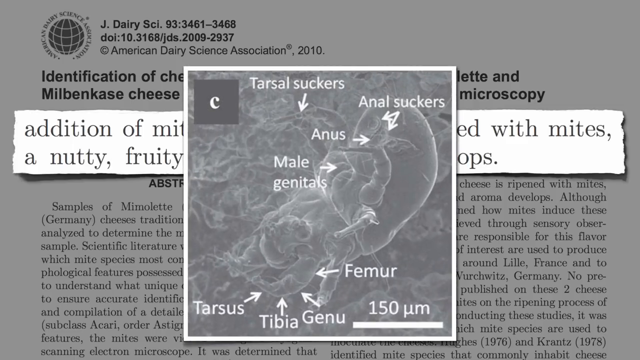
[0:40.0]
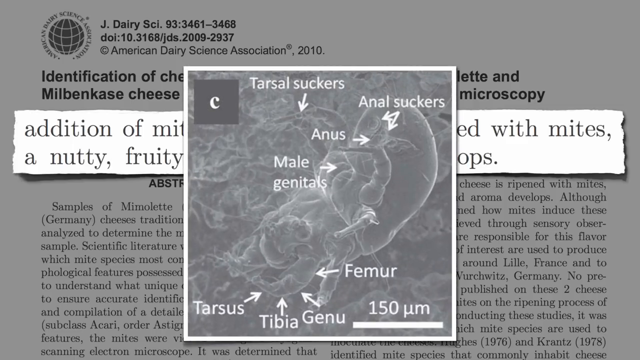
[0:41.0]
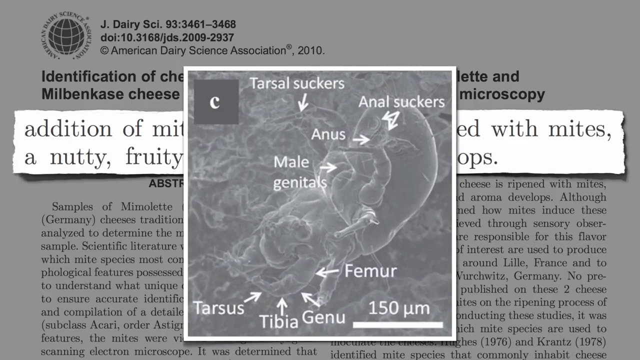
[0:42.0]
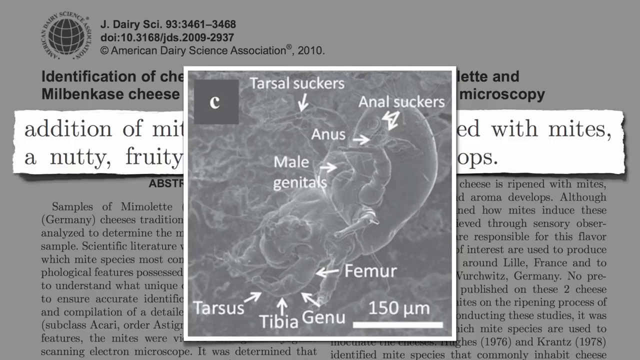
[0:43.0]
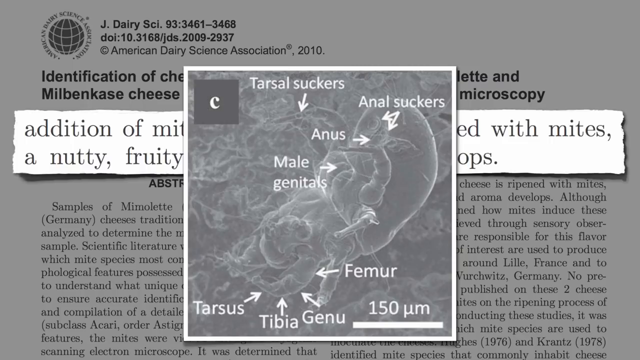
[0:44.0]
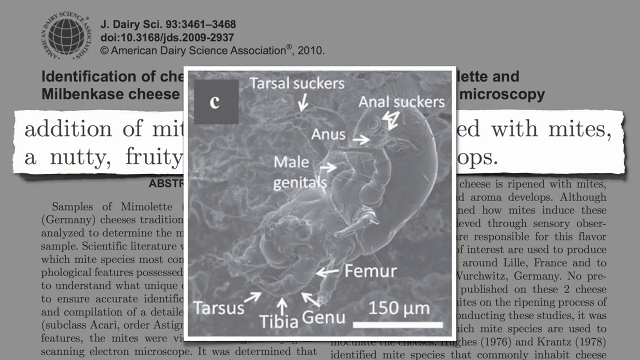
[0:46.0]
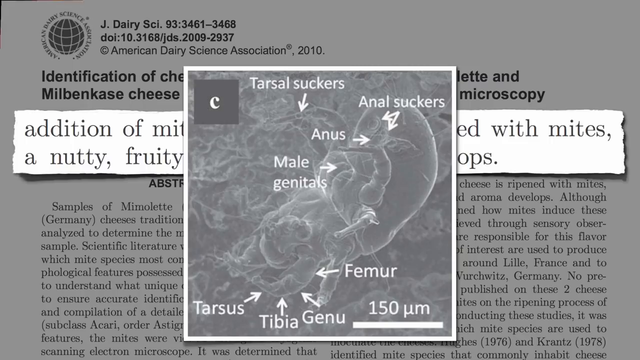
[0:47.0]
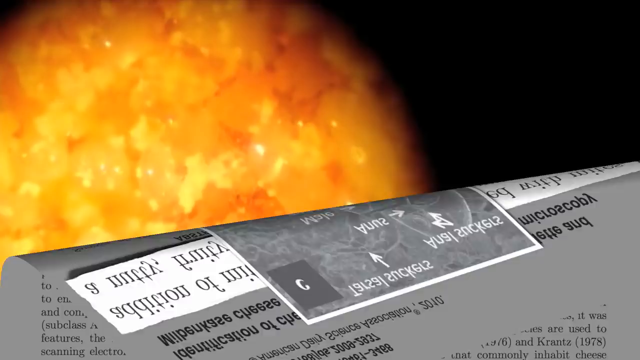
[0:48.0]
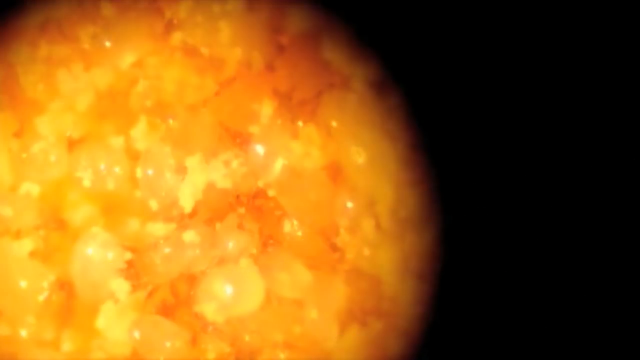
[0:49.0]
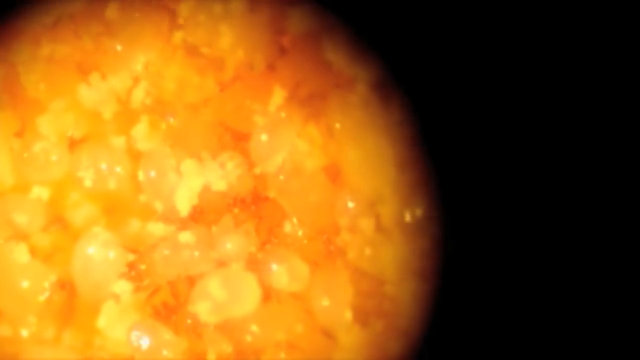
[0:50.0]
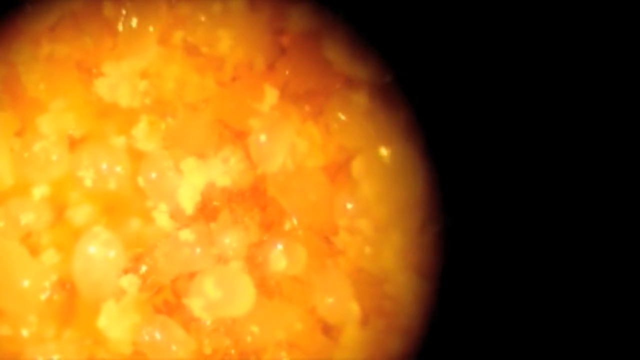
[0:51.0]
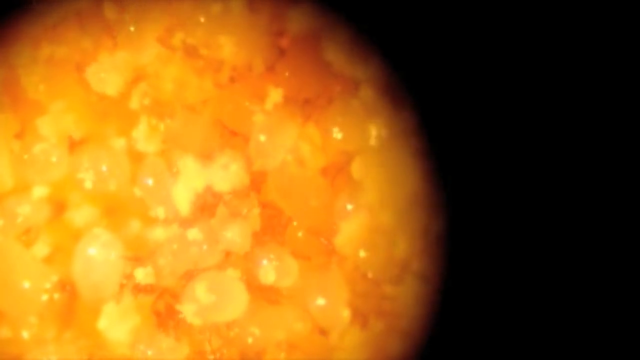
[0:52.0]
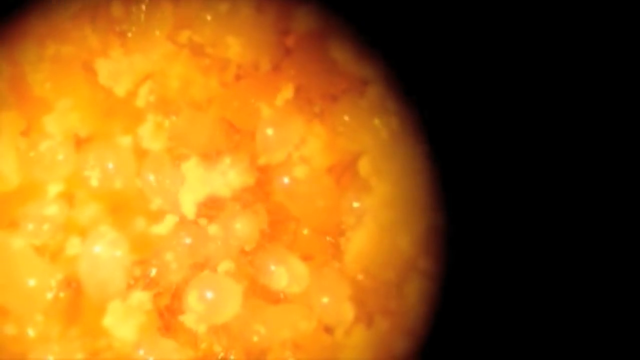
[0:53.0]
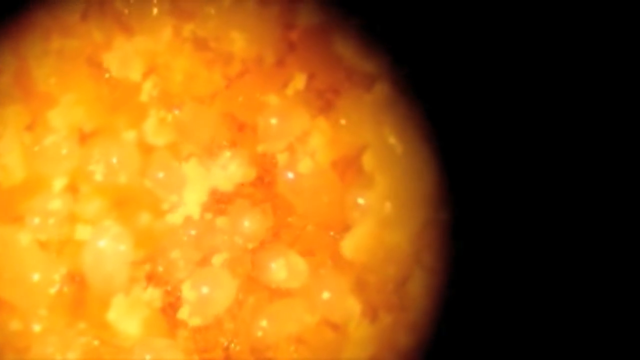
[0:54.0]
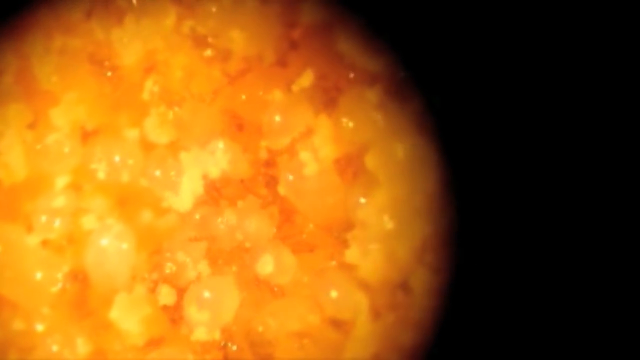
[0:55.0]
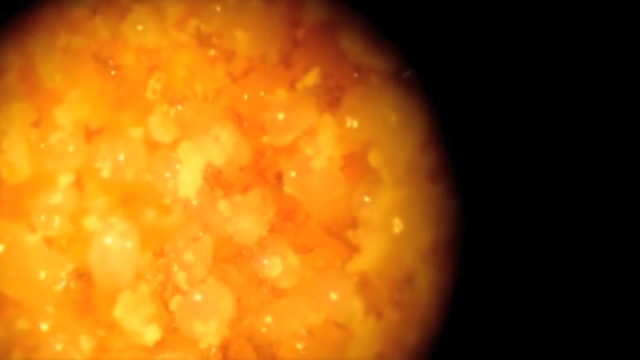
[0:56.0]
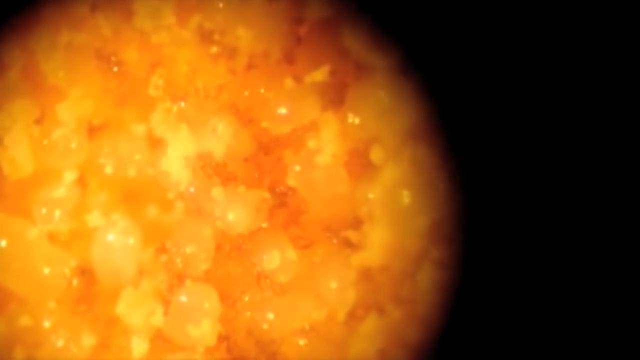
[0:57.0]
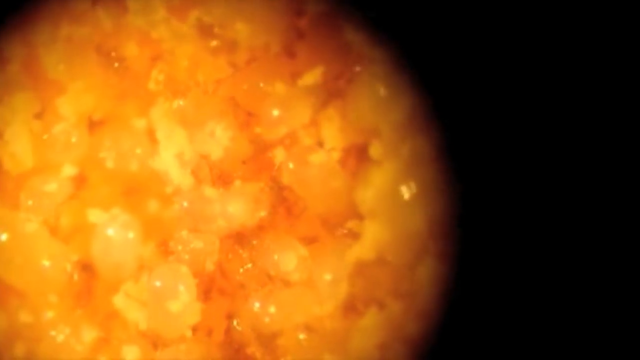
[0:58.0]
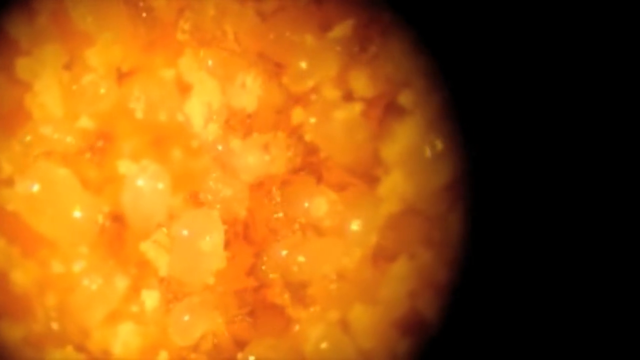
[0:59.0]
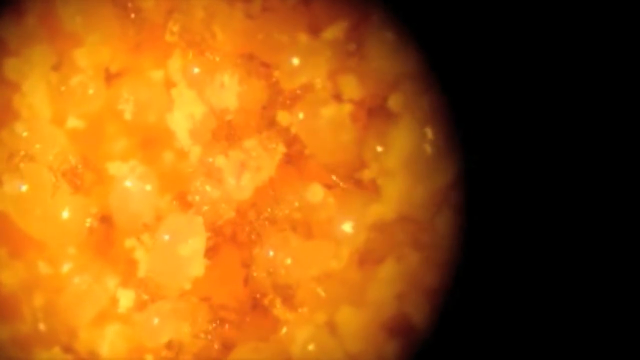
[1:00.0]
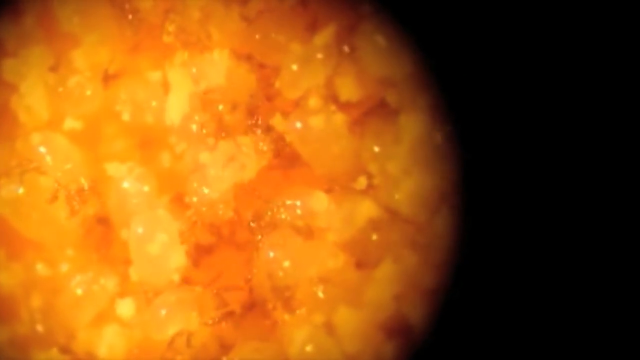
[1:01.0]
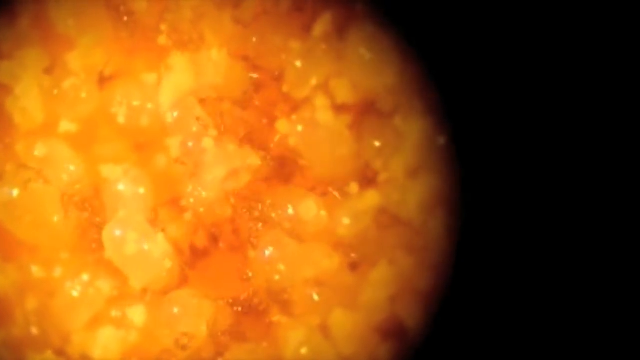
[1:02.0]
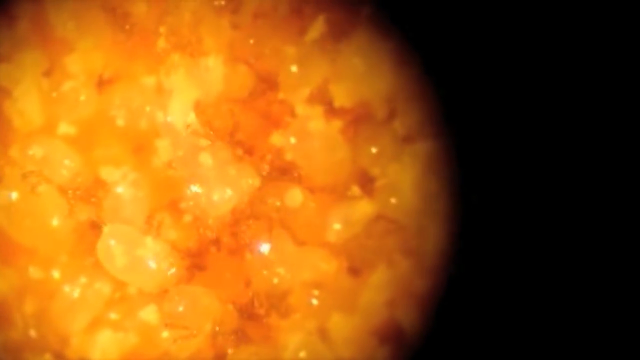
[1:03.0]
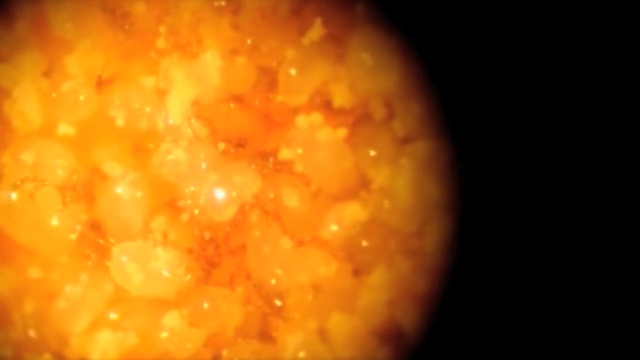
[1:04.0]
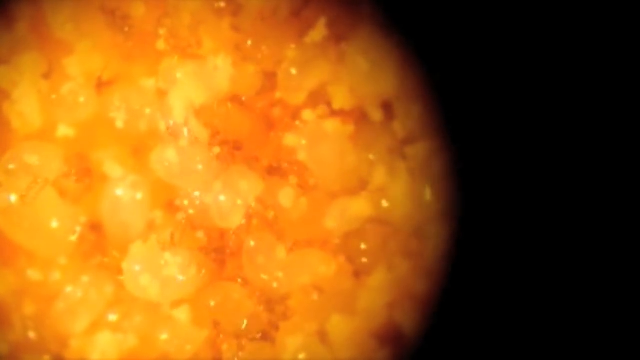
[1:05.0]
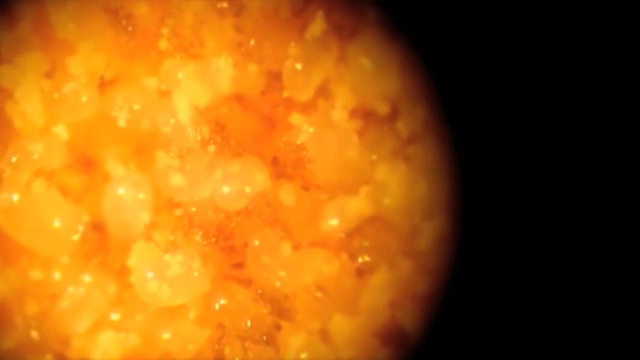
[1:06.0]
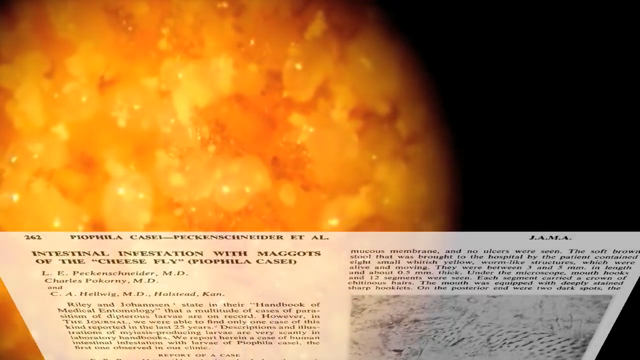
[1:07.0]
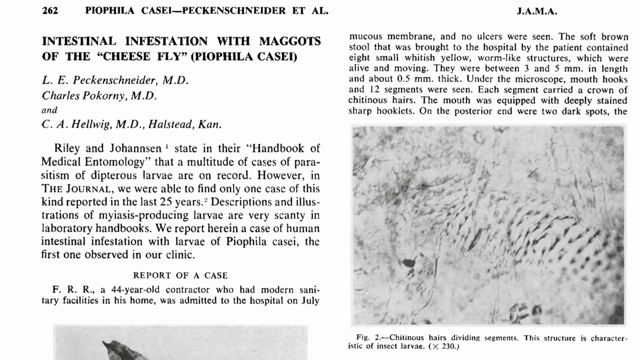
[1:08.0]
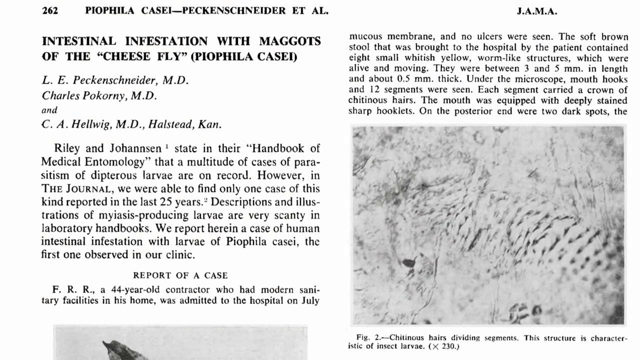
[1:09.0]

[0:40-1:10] A labeled picture of a male mite is shown, with its anus, femur, tibia and other parts labeled and the letter C at the top left of the image. The mite is drawn as white lines on a gray background. The page is then peeled away to reveal a moving picture that looks like a large red and orange circle on a black background. The circle seems to be the light of a microscope, and the mites inside are orange with some lighter orange parts throughout; they move while very closely clustered together. Another article is displayed, labeled "Intestinal infestation with maggots of the cheese" with "piophila casei" in parentheses. It lists the doctors who wrote it, and its text describes a 44-year-old contractor admitted to the hospital, where ulcers in his mucous membrane were seen.